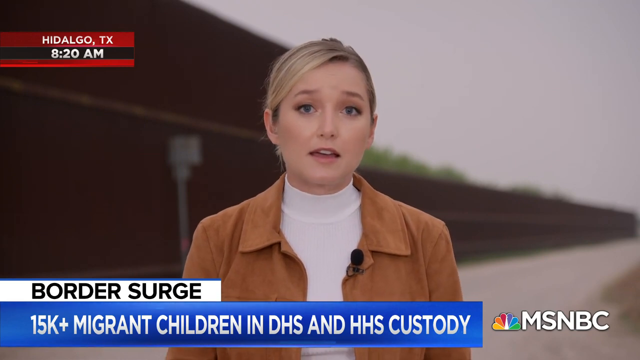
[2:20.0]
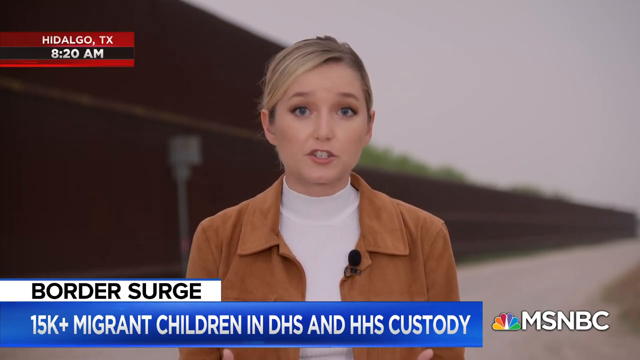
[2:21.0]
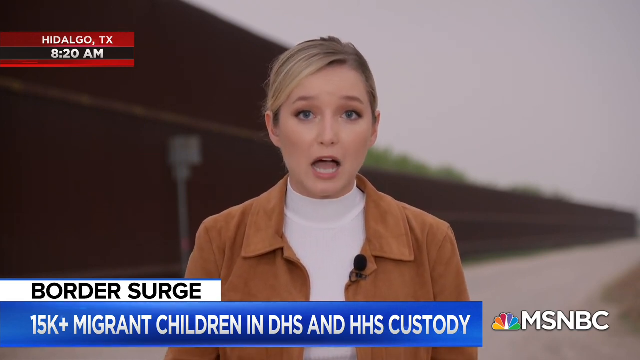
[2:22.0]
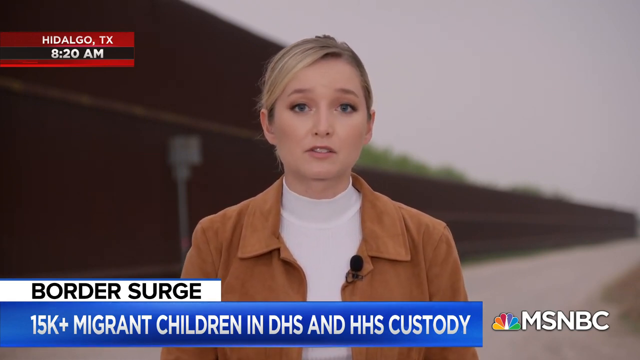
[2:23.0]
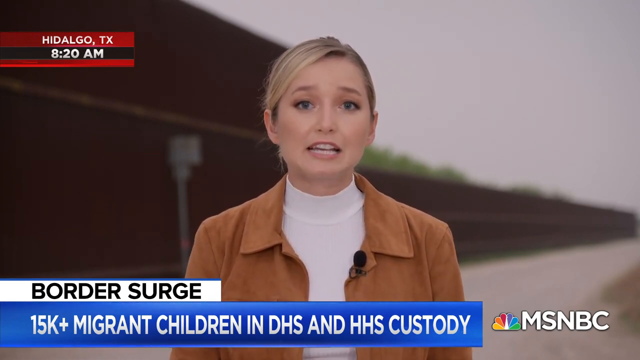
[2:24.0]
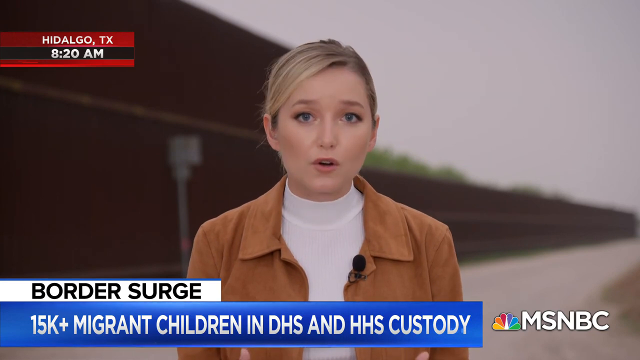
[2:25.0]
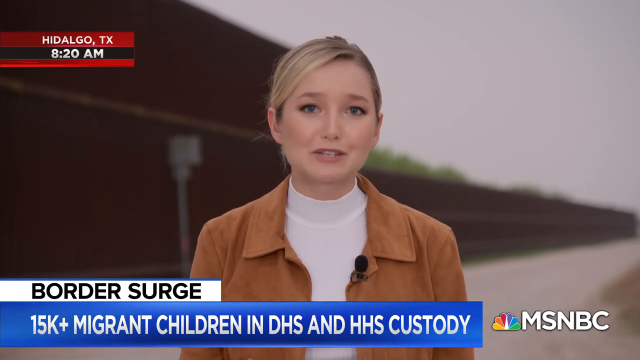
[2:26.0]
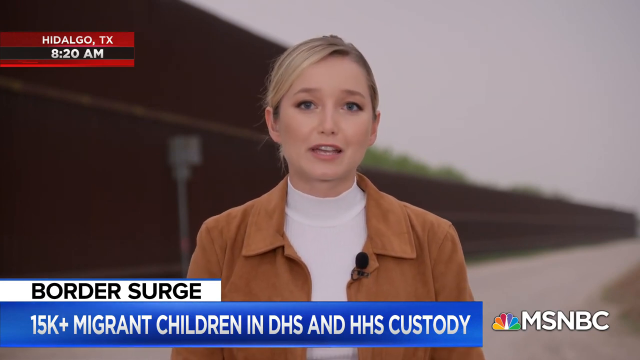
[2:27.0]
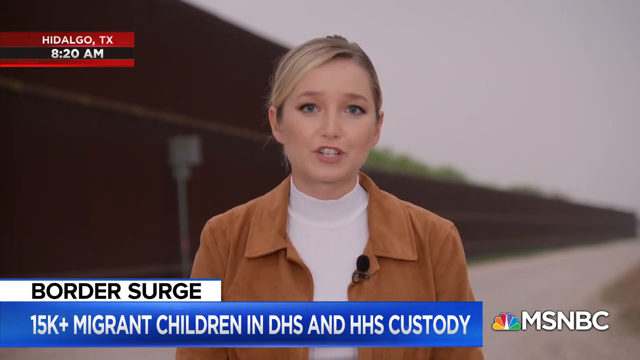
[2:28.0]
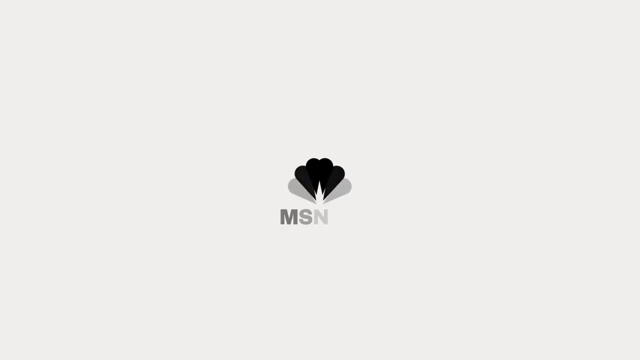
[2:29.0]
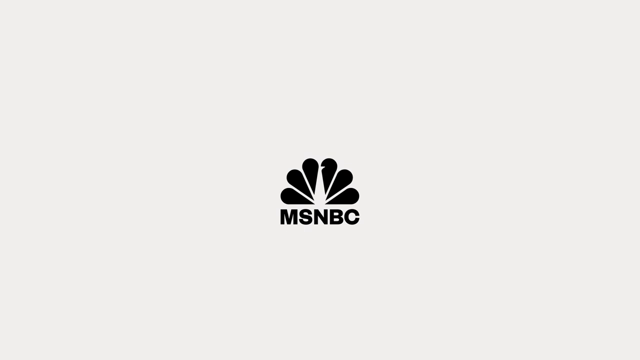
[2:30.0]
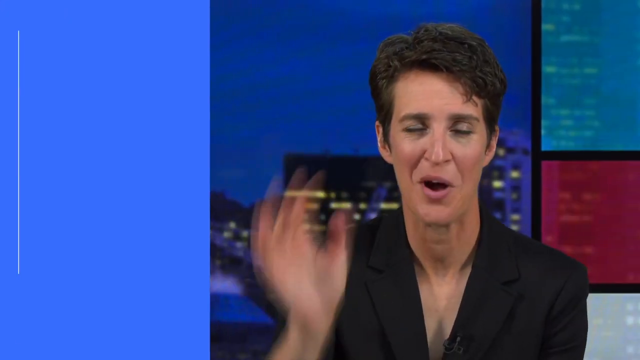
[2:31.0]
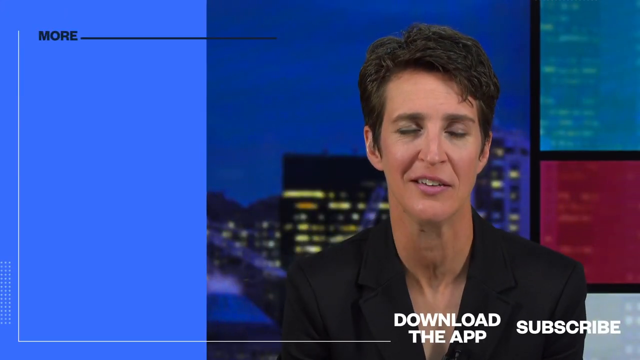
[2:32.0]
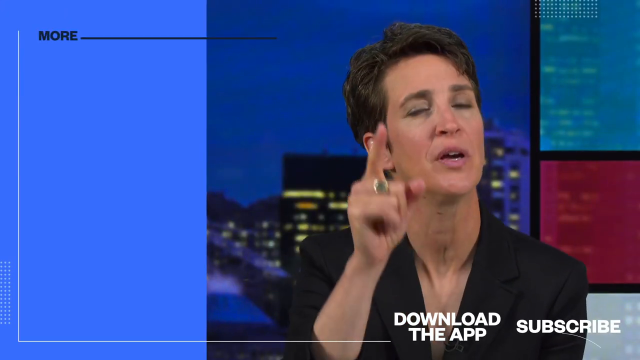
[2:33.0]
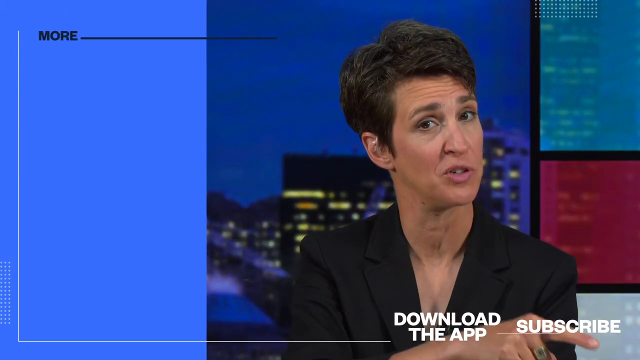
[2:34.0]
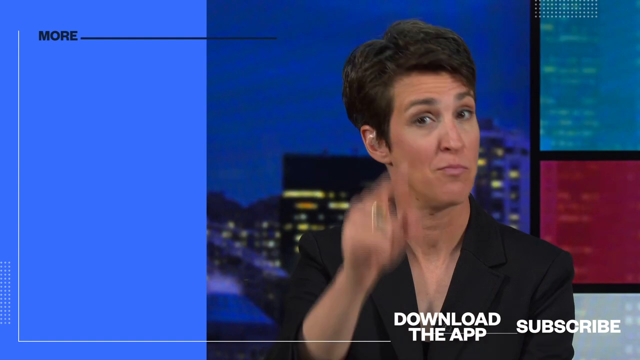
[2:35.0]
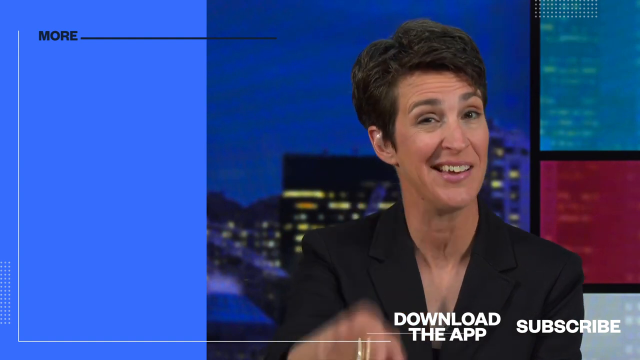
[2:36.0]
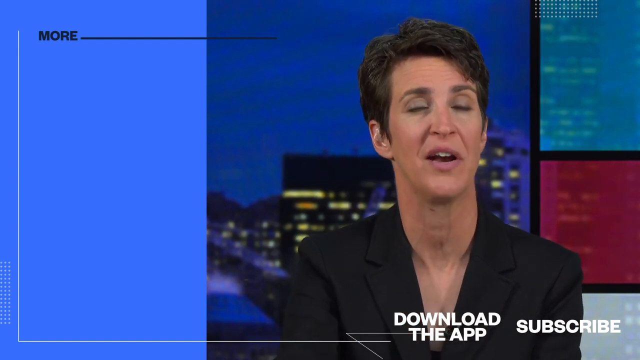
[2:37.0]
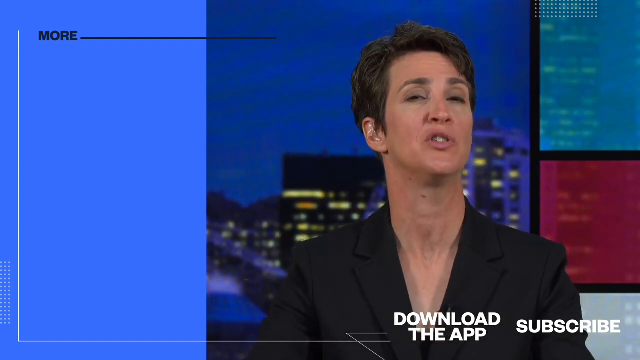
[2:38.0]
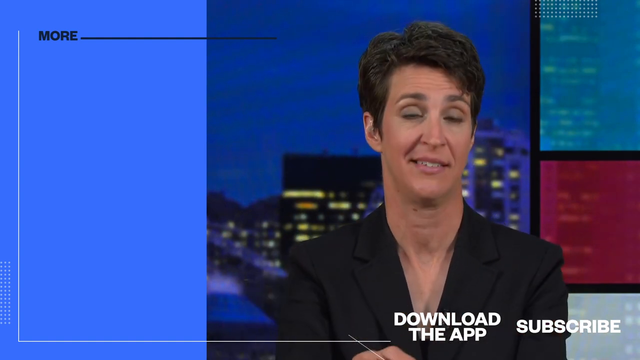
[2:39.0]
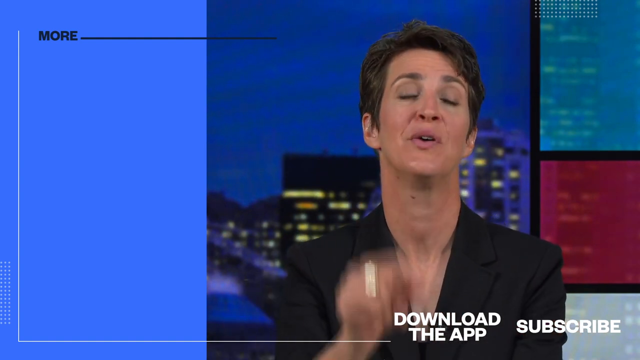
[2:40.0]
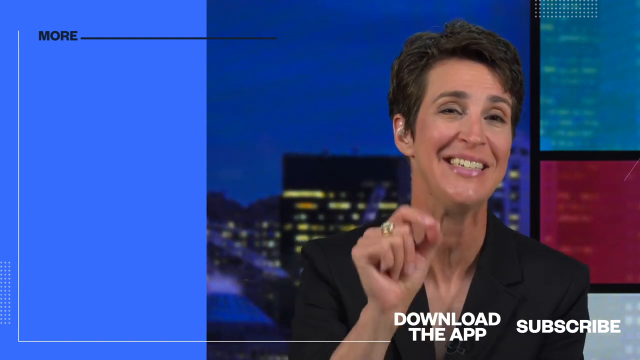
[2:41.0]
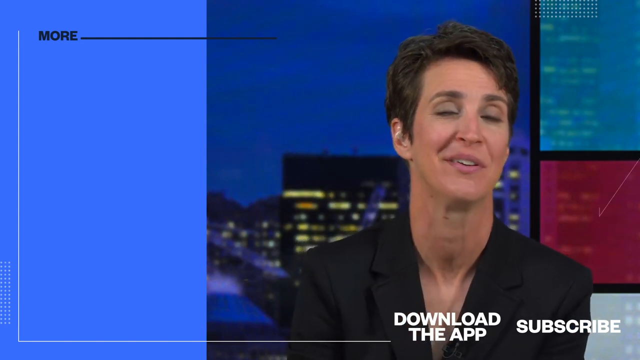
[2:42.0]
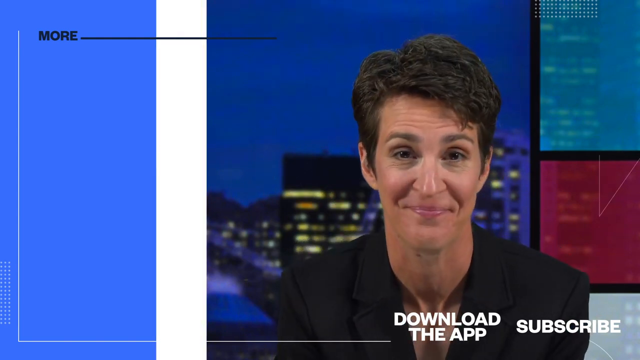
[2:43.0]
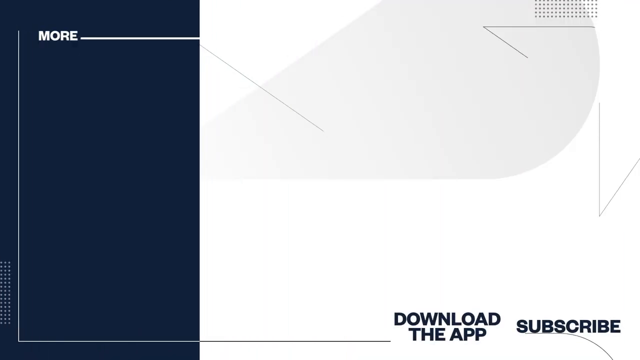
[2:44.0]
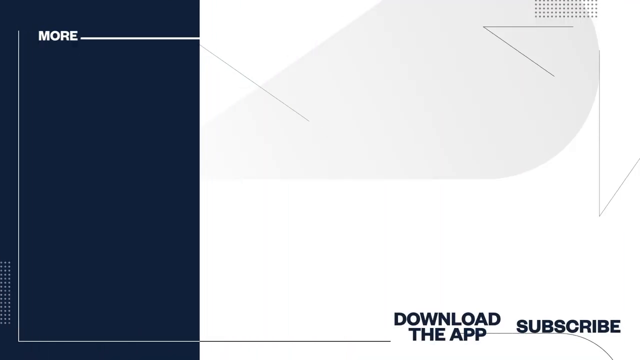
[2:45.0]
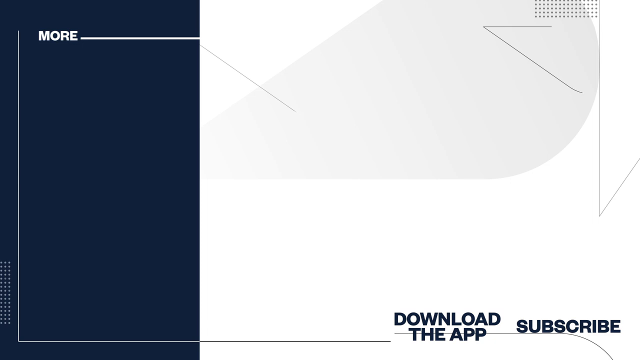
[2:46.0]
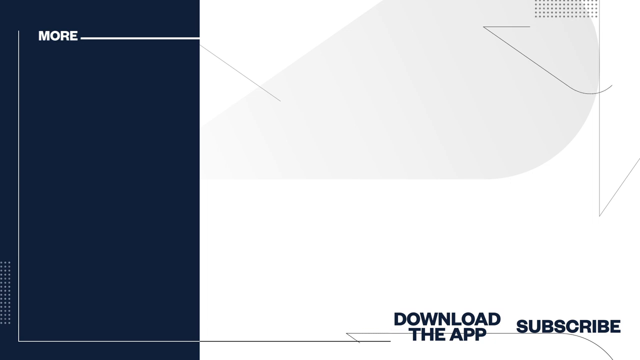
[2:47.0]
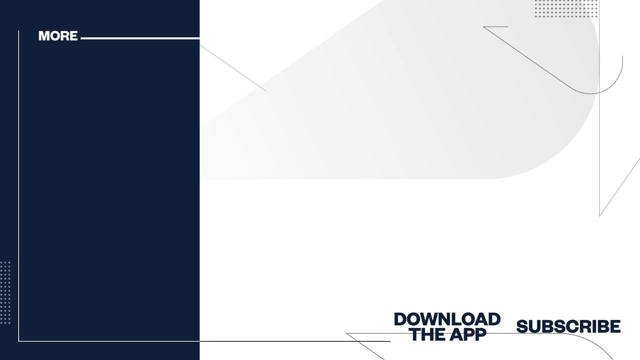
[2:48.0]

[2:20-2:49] The same female reporter is still speaking into the camera, with the graphic reading "Border Surge" in the lower left and a brown building behind her. The video then transitions to a white background with "MSNBC" in black in the center and the NBC peacock logo just above it, also in black and white. The video then moves from right to left, revealing a woman on the right side of the screen with short black hair and a black top. She waves at the camera and speaks, pointing toward the camera at several points and using her hands expressively as she talks. Finally, the video transitions to a navy blue and white background, navy blue on the left and white on the right, with parallel vertical white lines on the left side and the word "More" in the upper left corner.